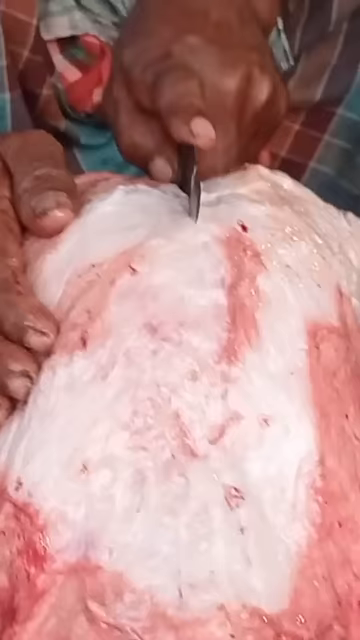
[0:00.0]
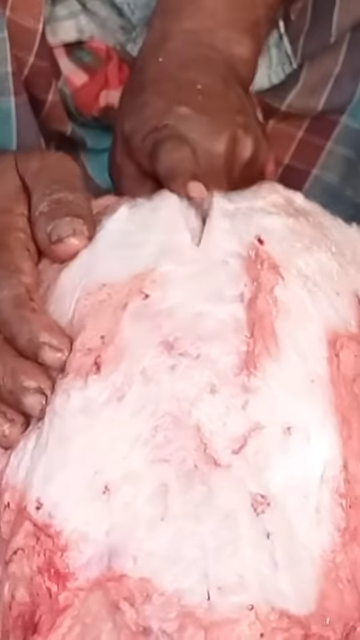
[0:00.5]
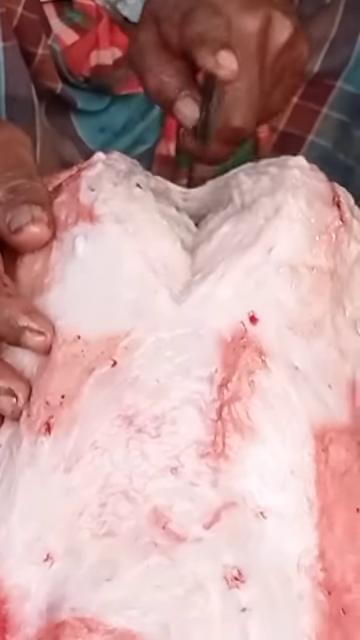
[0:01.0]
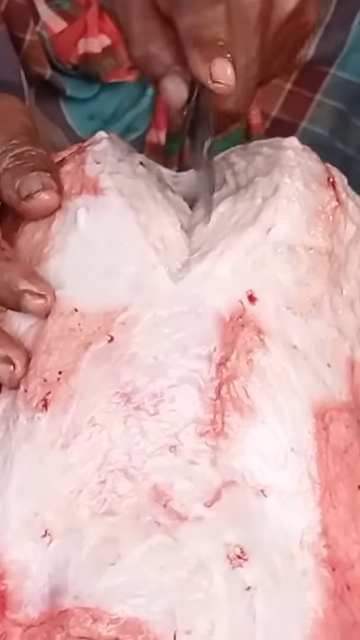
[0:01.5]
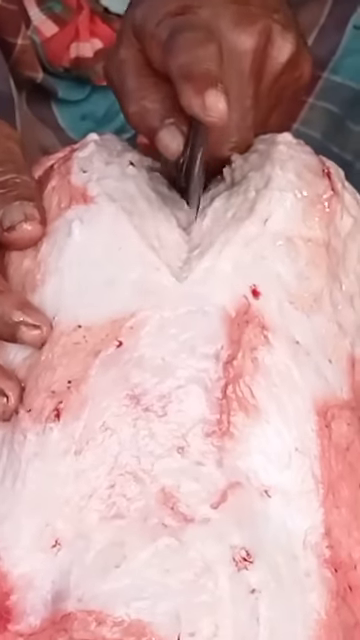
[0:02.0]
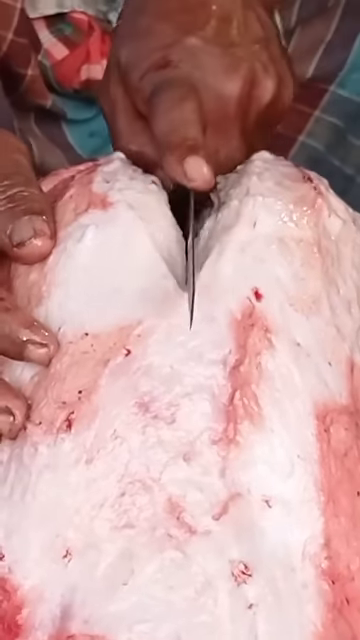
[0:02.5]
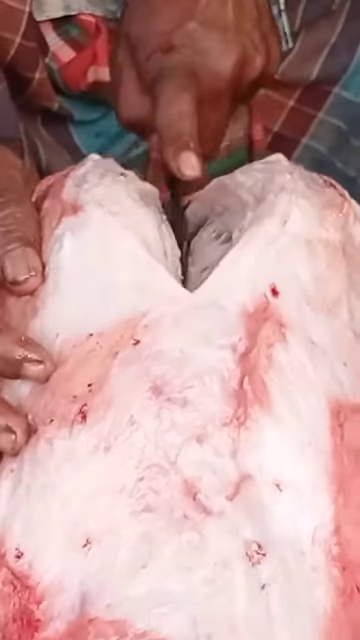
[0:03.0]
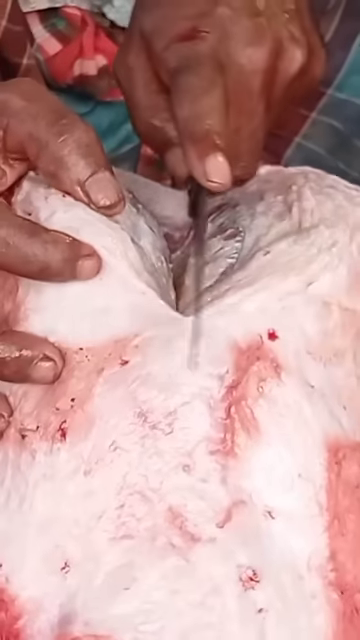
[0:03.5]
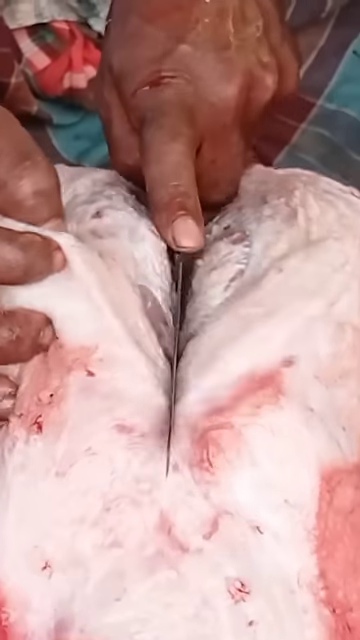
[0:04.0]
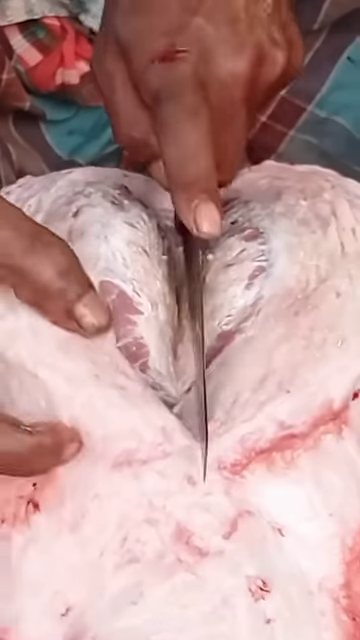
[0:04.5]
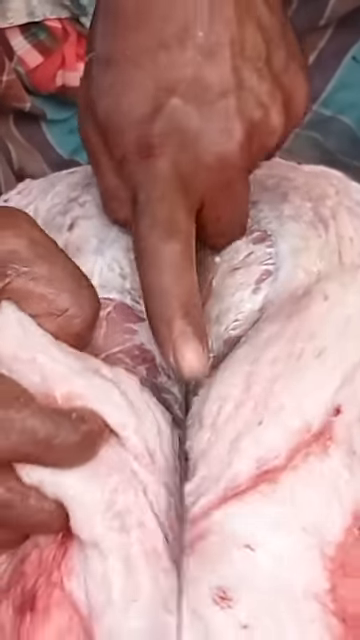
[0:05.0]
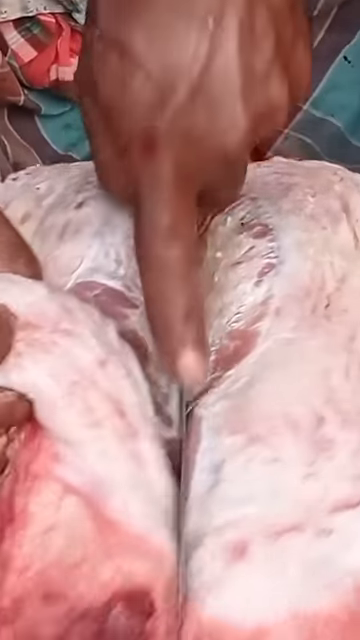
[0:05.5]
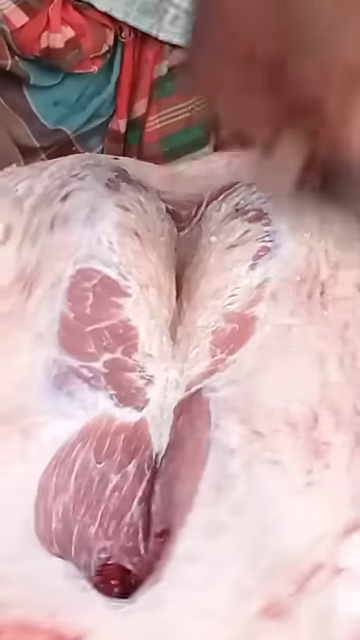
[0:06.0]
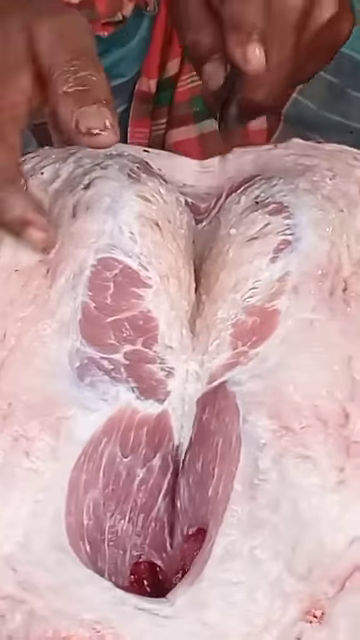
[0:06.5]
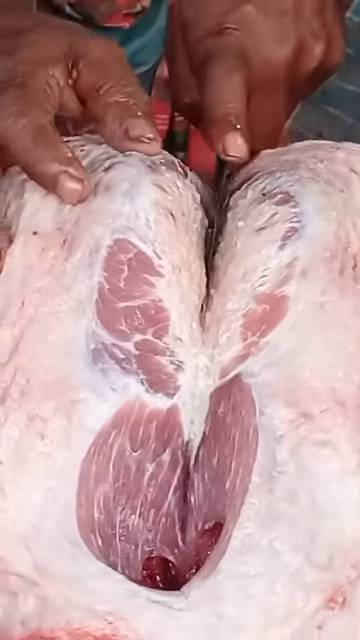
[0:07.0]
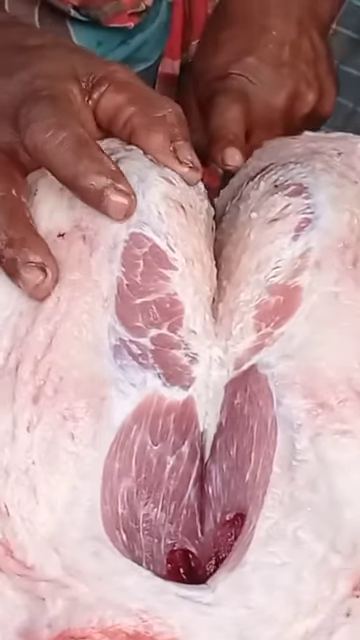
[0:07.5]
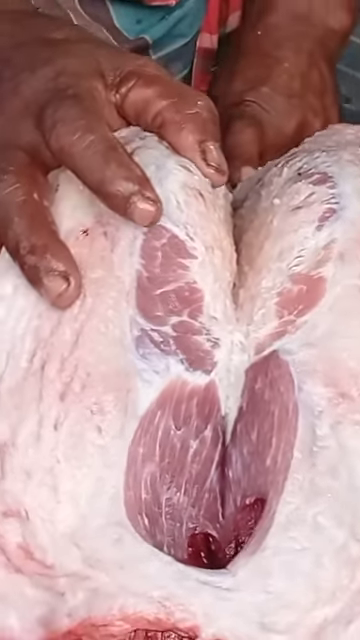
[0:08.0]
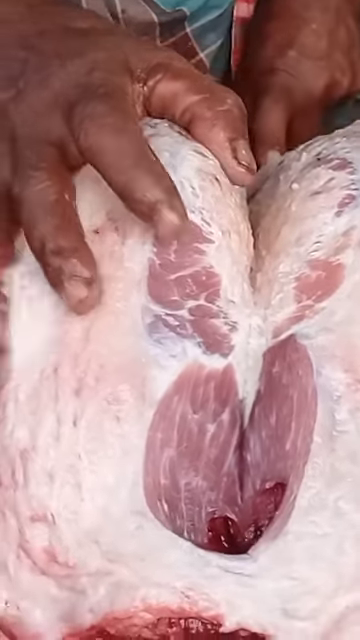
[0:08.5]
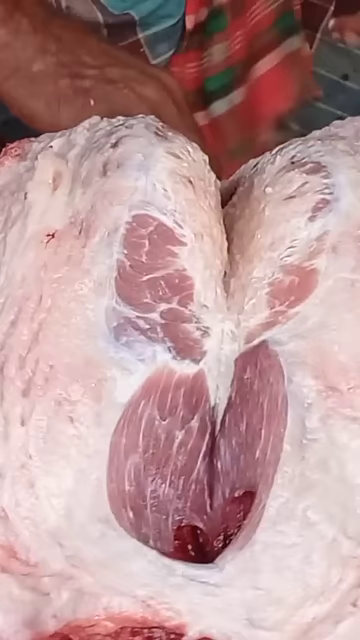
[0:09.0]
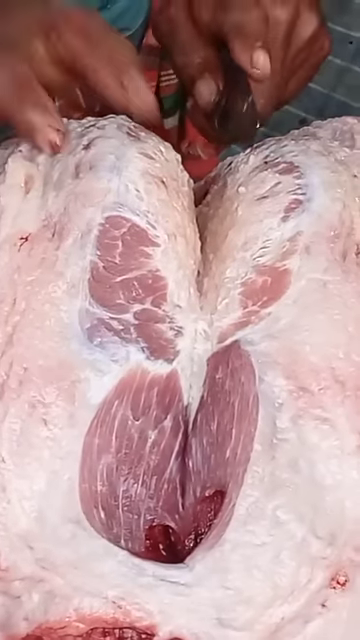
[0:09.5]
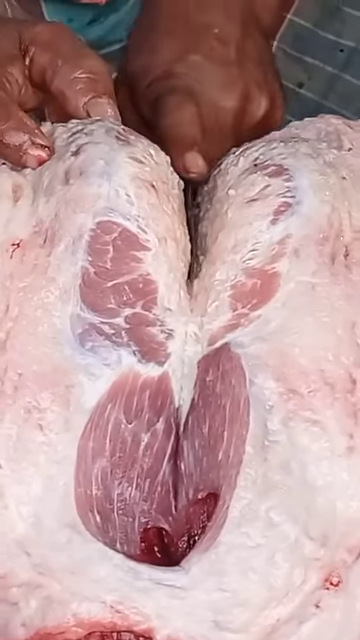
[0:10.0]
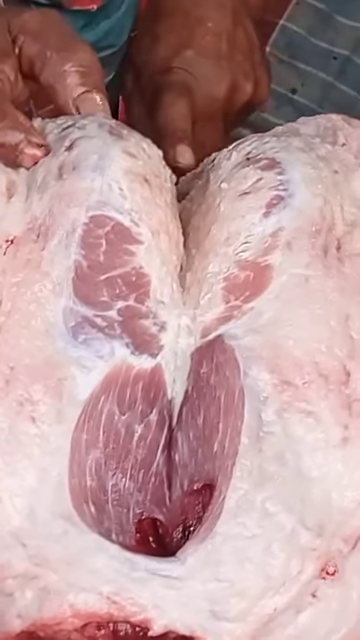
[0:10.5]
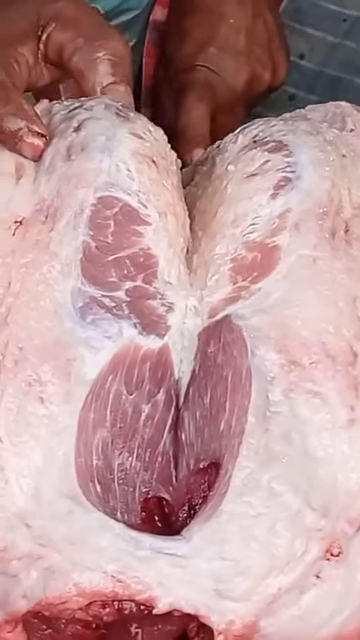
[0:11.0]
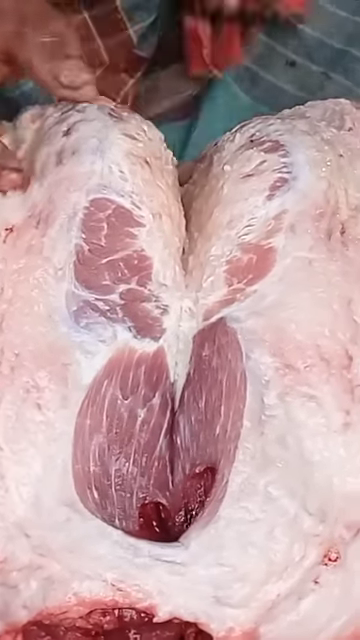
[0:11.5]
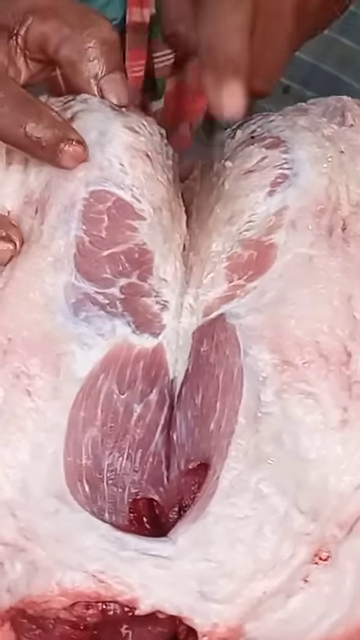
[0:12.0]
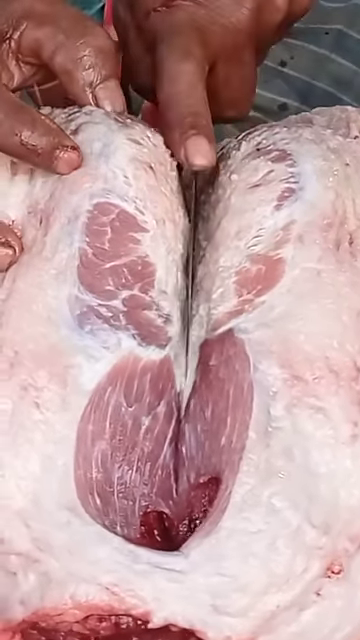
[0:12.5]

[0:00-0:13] A big cut of meat is on a table. The meat is white and light pink. A person takes a knife to the very middle of the cut and starts cutting down the middle, going from the bottom of the piece of meat, toward themselves, and working their way up to the top, away from themselves. The meat slowly comes apart, revealing the inside; they are cutting through what looks like mostly fat, and further inside there is a little more of the pale pink color of meat. The meat is very wiggly and wobbles a lot as it is cut. The person holds it with their right hand and appears to be cutting with their left hand.